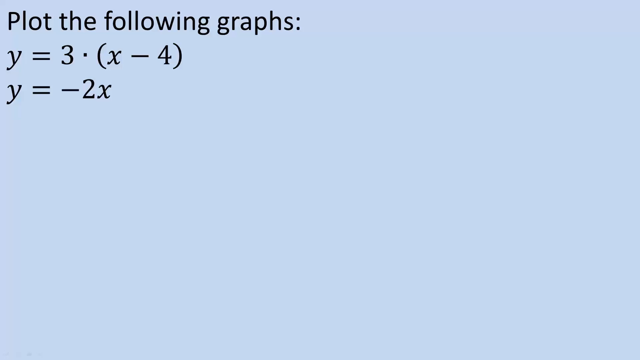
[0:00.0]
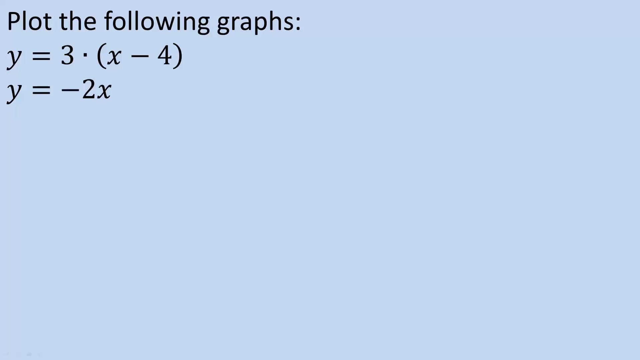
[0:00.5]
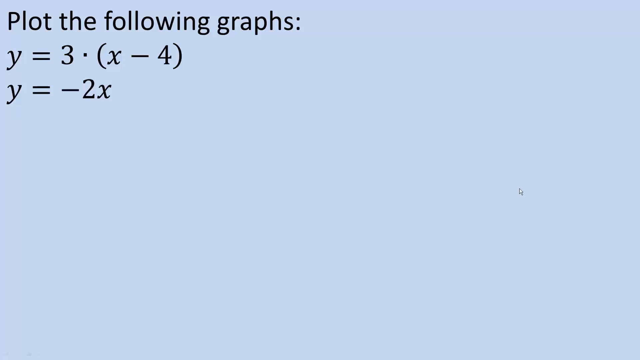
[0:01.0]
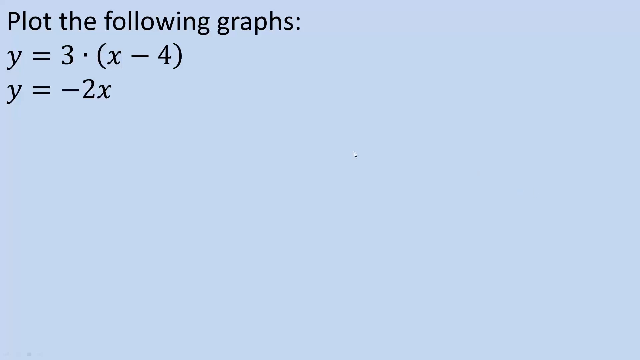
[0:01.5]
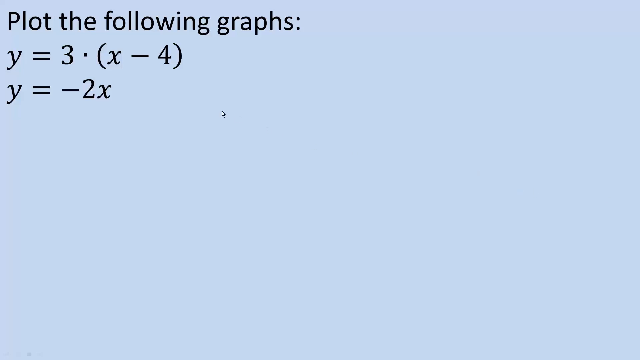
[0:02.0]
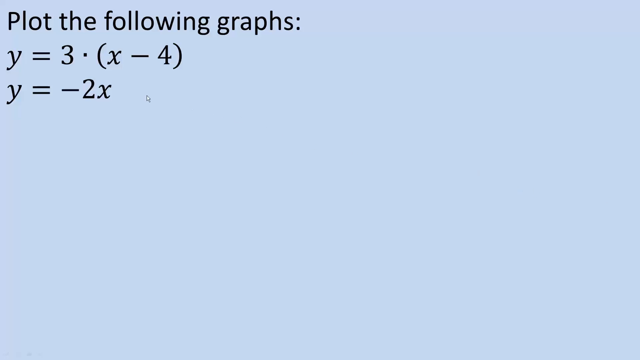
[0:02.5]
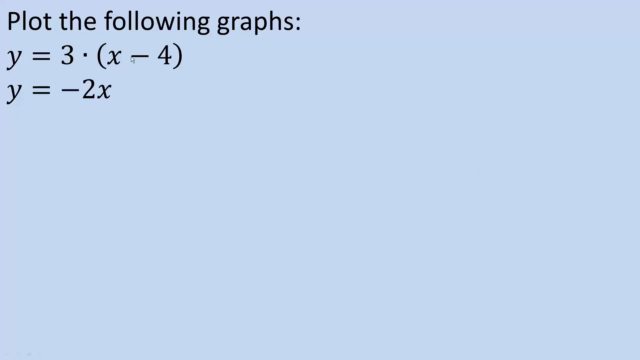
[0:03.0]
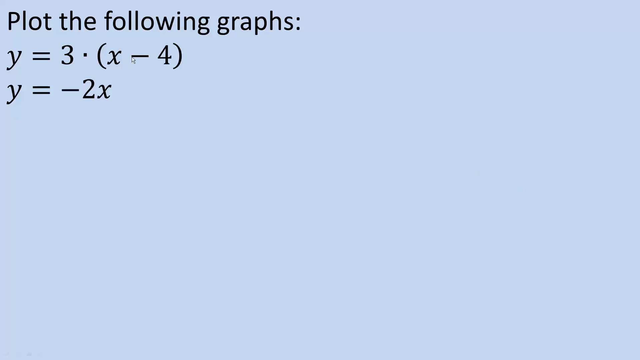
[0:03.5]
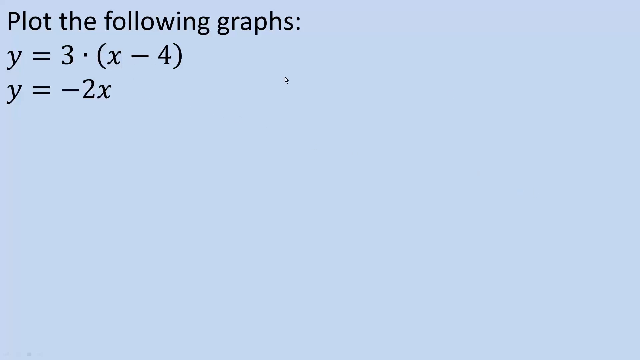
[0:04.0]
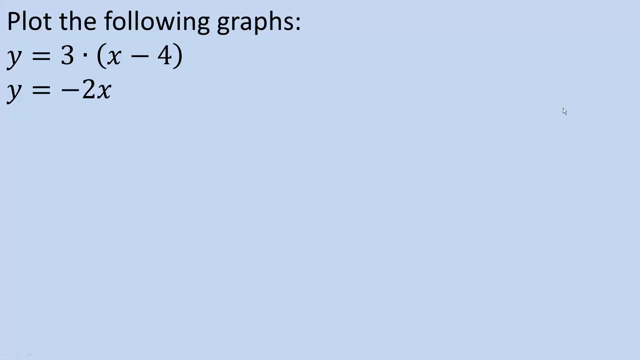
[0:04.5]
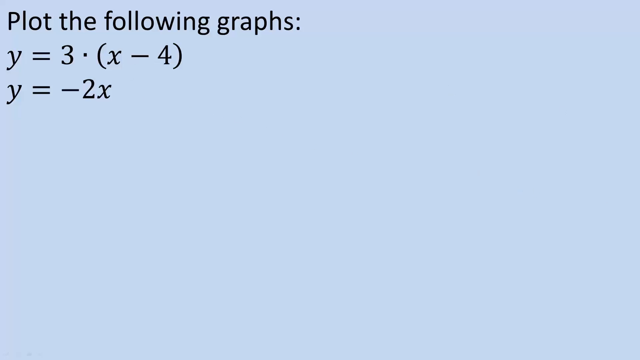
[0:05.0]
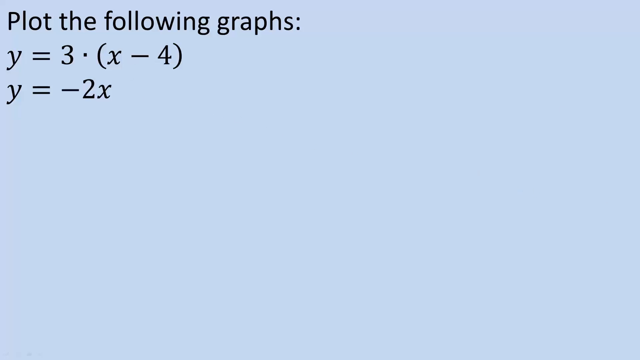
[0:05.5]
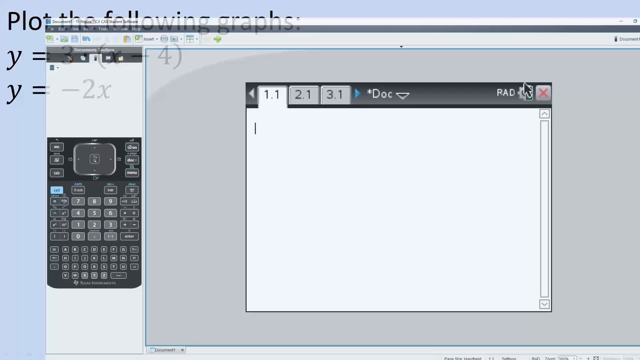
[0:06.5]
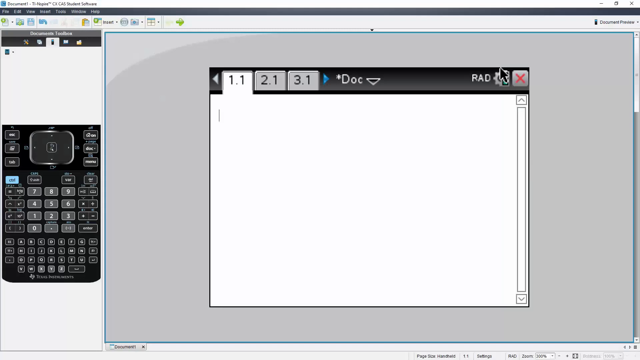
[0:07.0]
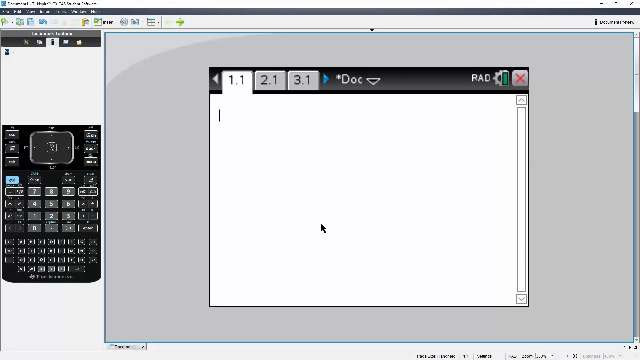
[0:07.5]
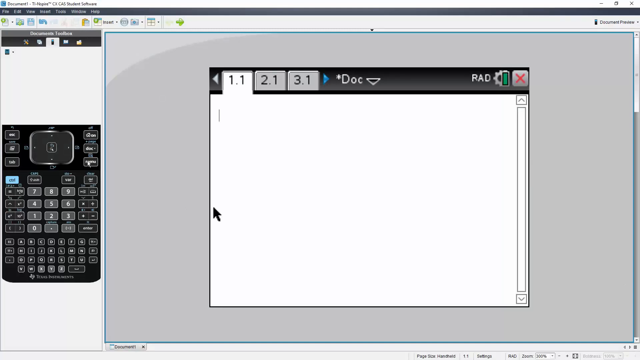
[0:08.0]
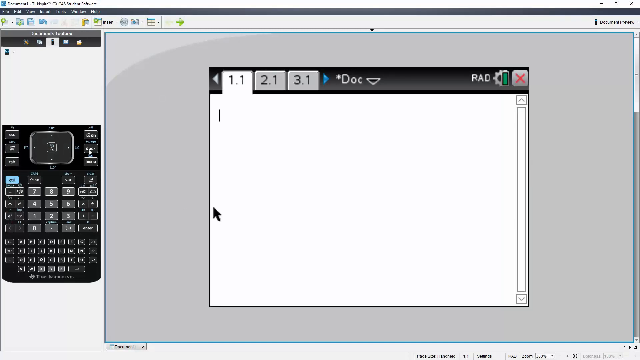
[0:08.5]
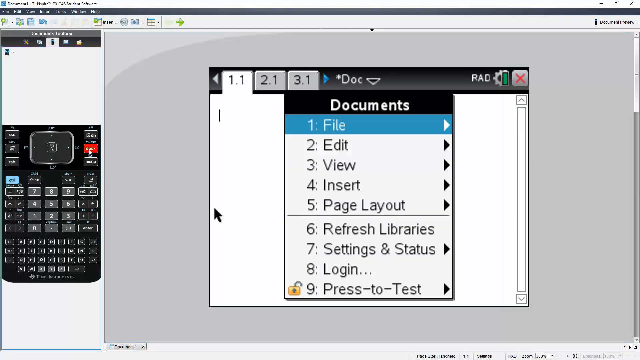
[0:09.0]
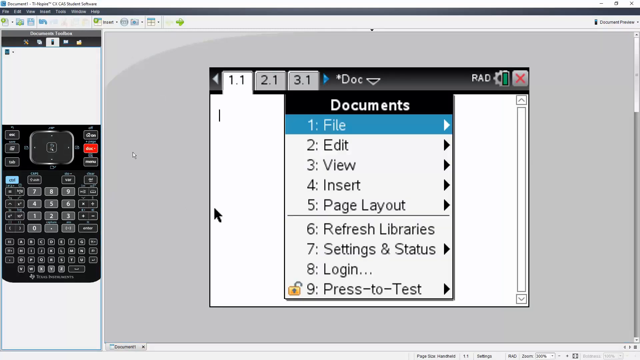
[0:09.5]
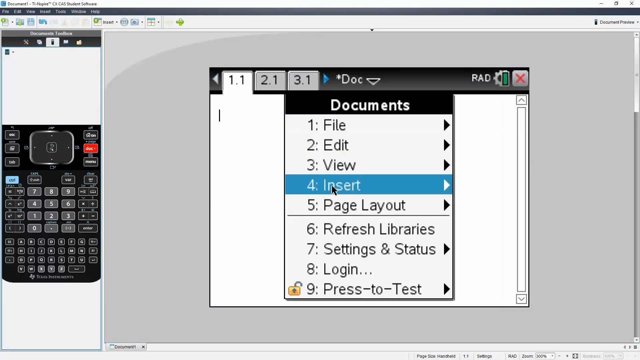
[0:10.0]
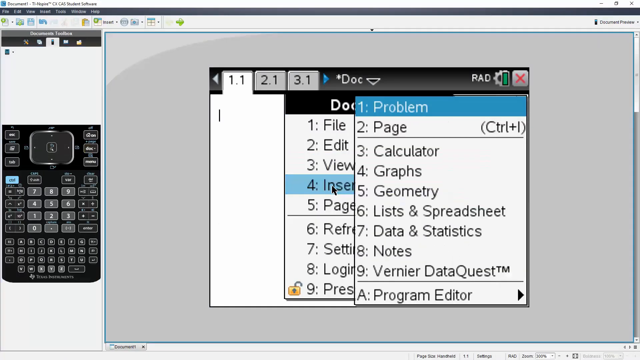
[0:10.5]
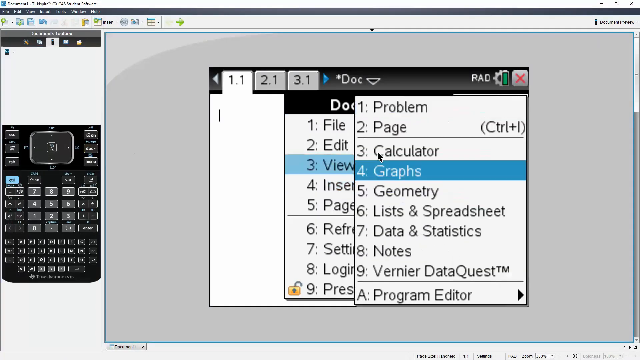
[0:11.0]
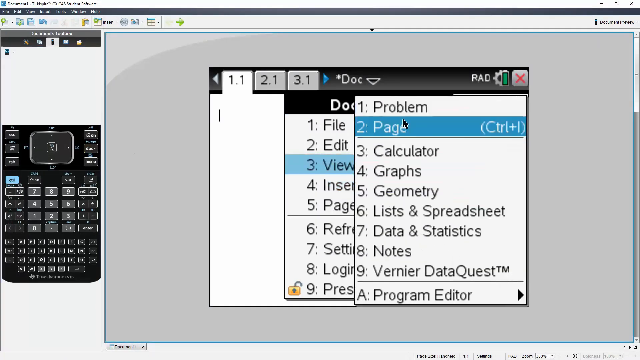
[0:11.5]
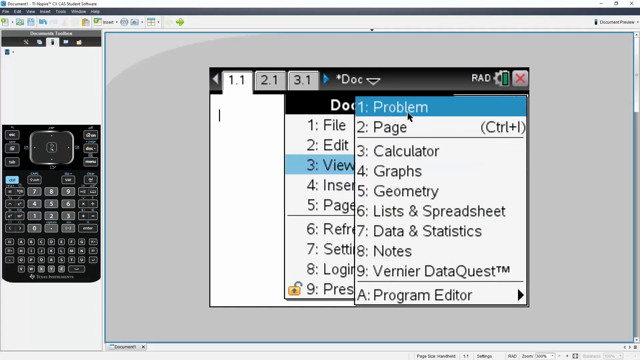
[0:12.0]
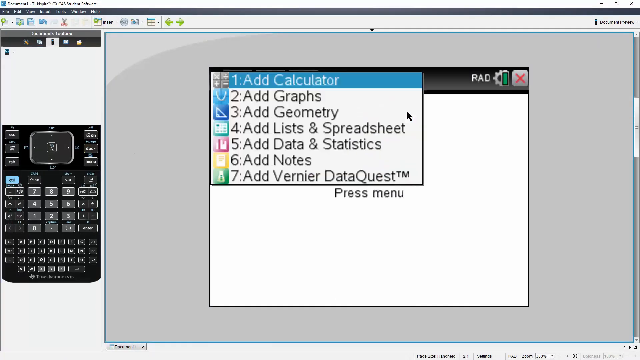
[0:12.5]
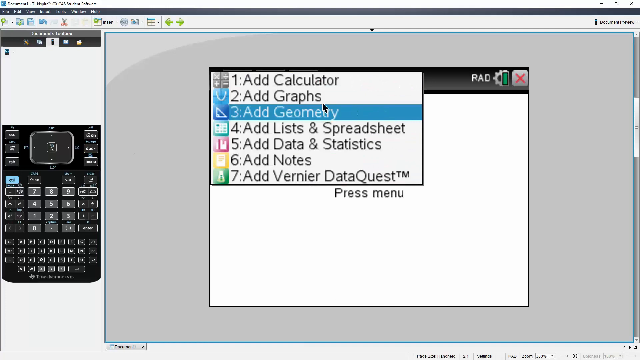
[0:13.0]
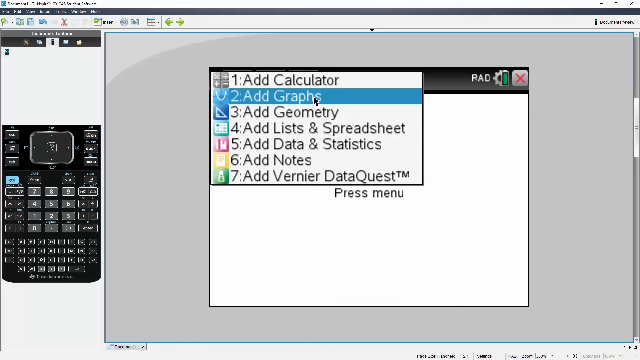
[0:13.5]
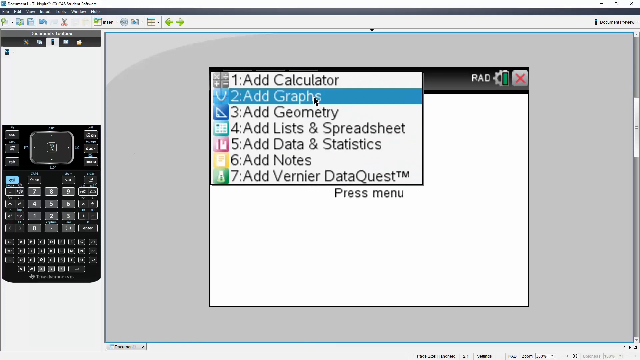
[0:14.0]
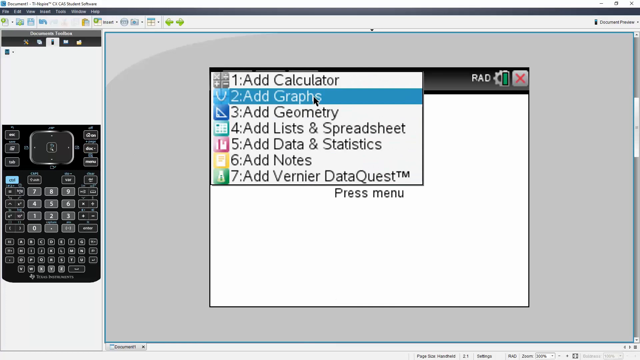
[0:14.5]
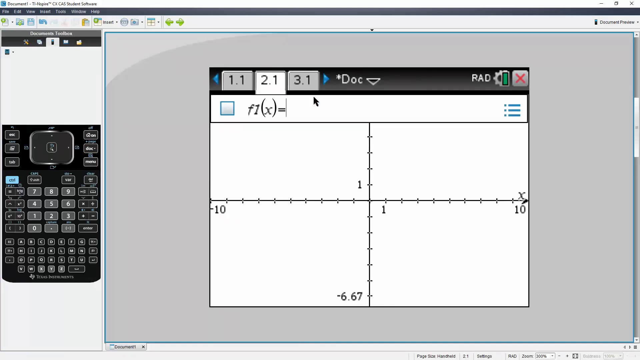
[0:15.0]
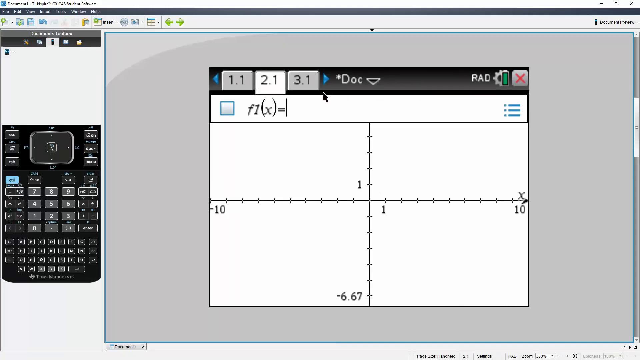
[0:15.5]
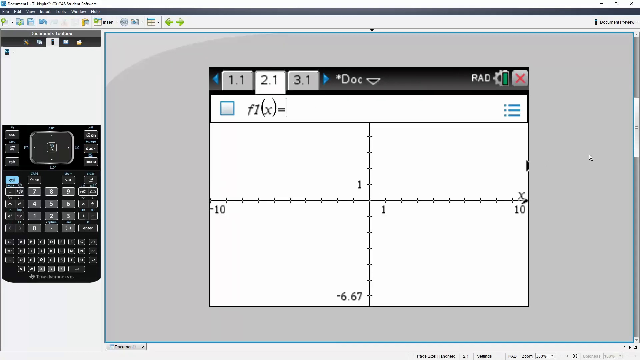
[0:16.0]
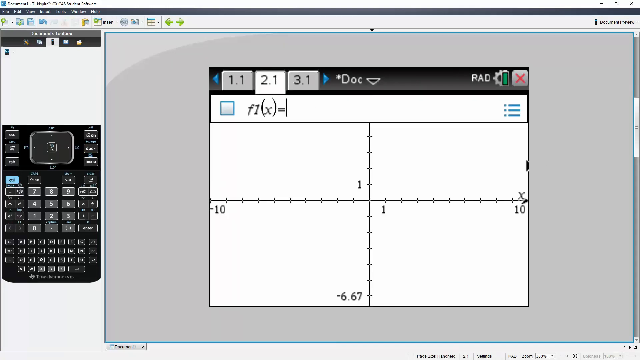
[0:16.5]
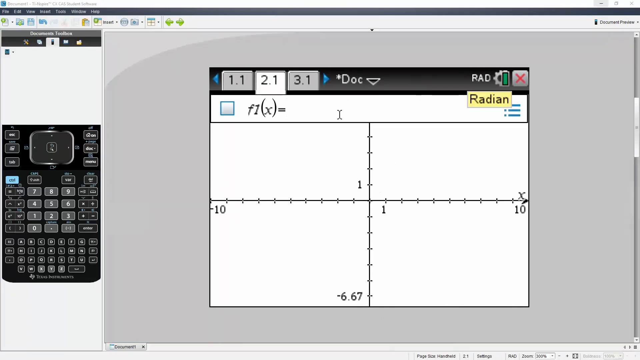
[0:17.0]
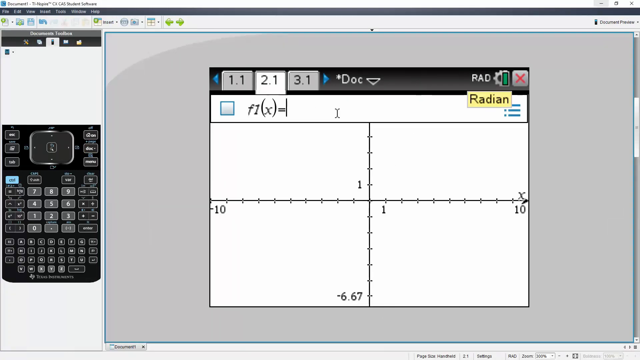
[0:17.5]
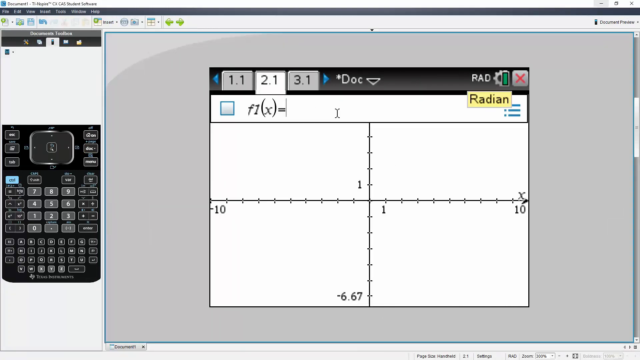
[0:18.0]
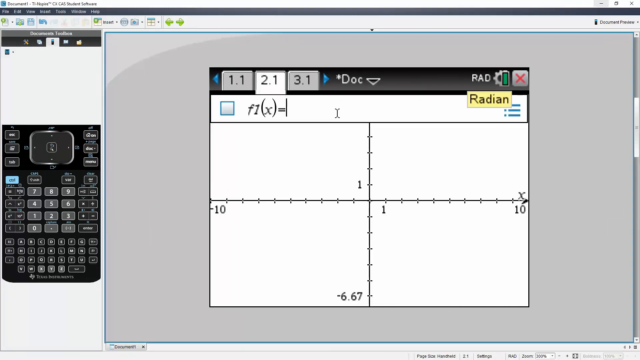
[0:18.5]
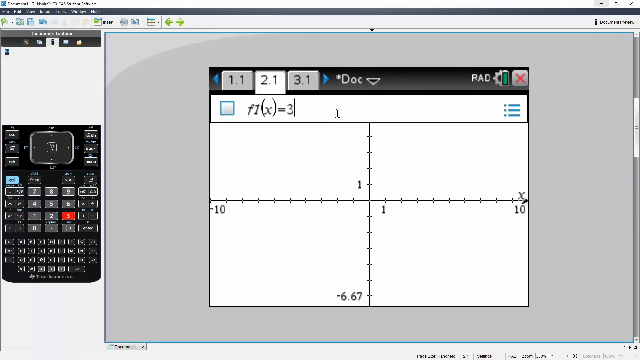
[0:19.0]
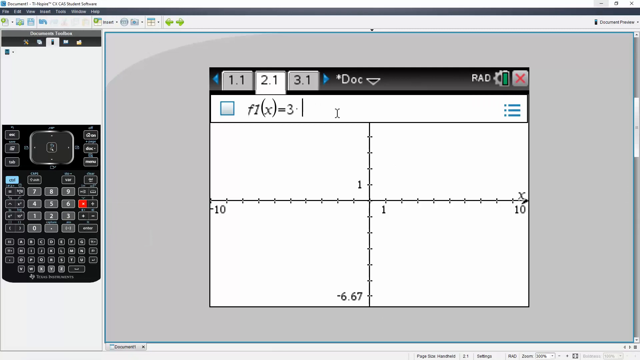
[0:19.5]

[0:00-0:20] The video is about solving mathematics, showing how to plot graphs of equations including y = 3 and y = minus 2x. It seems to be all about doing mathematics. A calculator is visible, and some numbers are written on the screen.